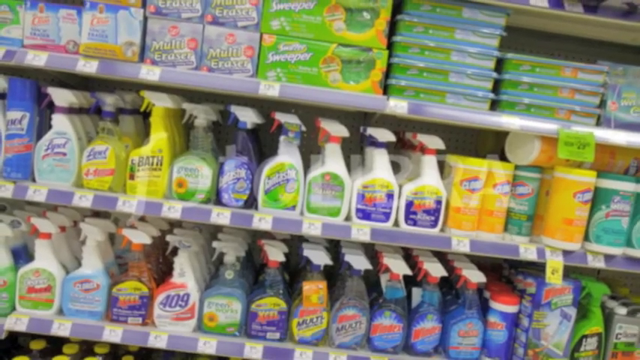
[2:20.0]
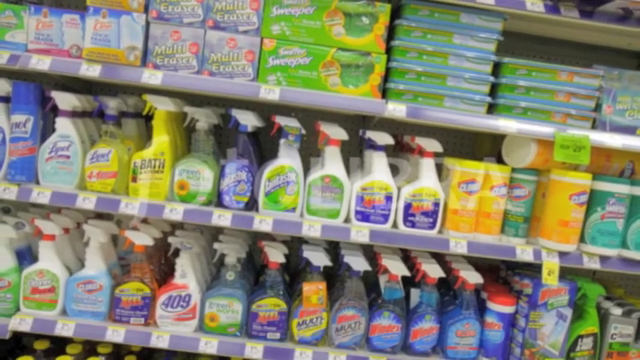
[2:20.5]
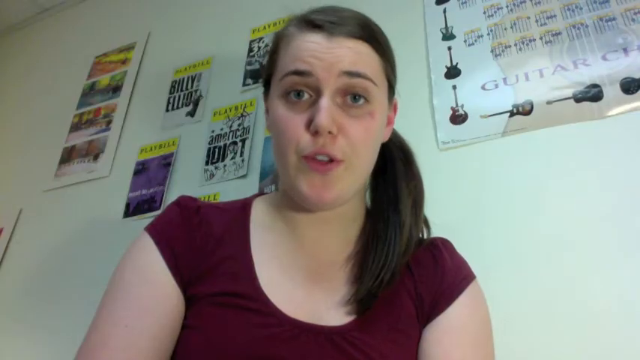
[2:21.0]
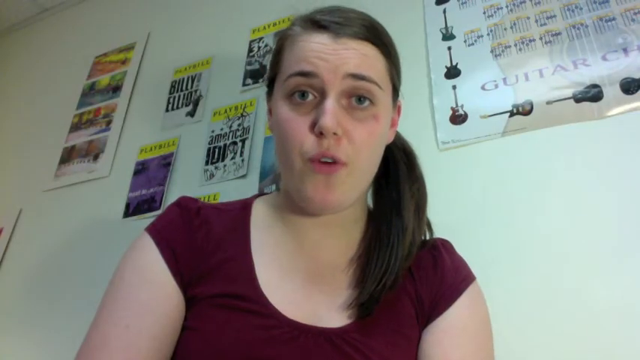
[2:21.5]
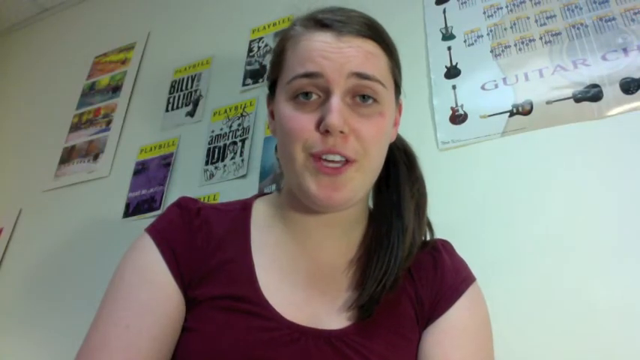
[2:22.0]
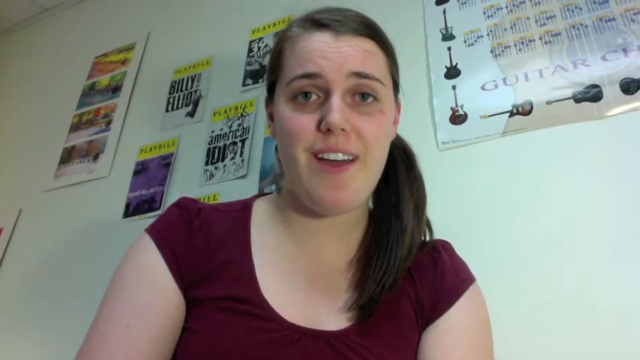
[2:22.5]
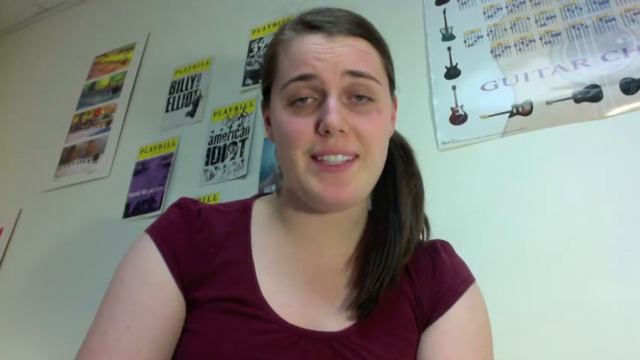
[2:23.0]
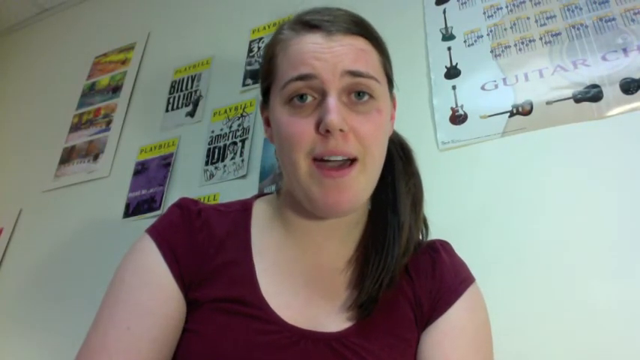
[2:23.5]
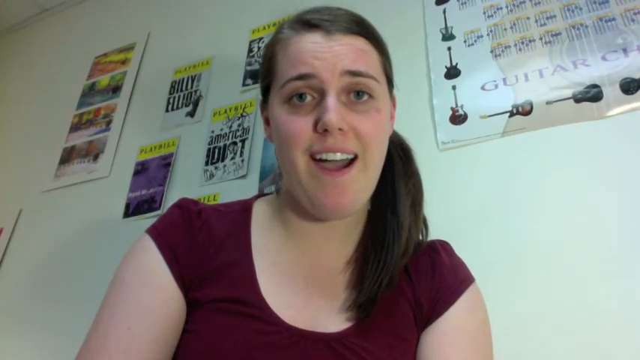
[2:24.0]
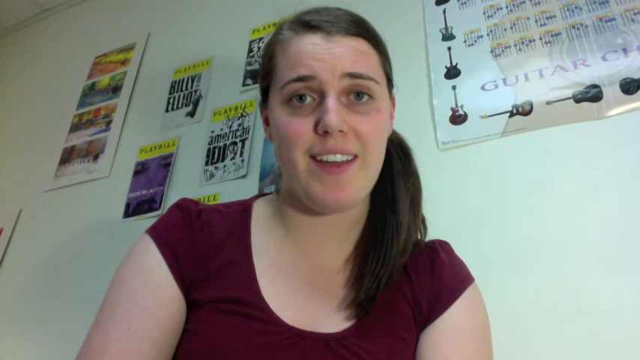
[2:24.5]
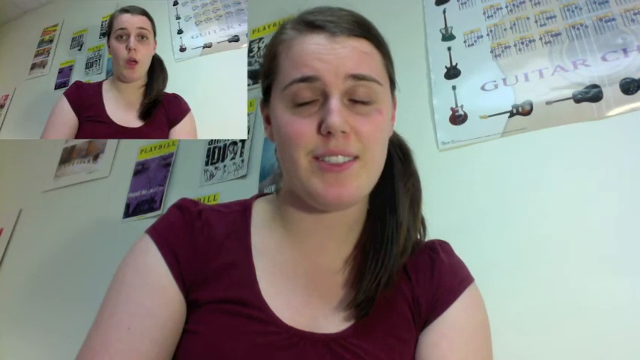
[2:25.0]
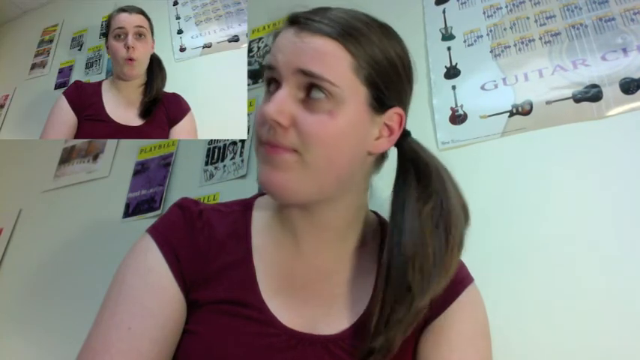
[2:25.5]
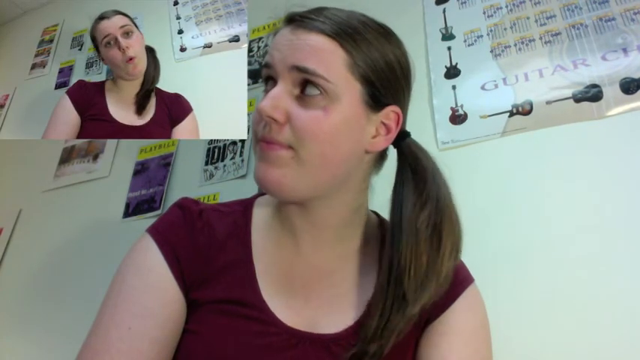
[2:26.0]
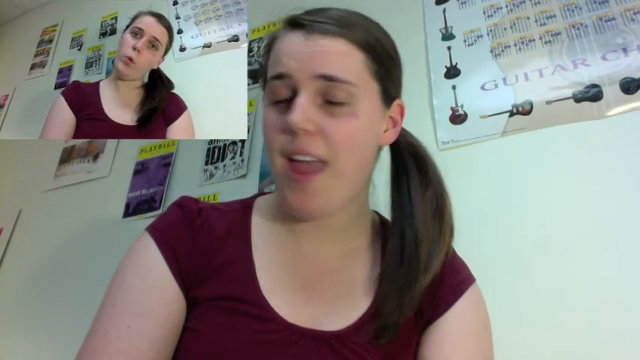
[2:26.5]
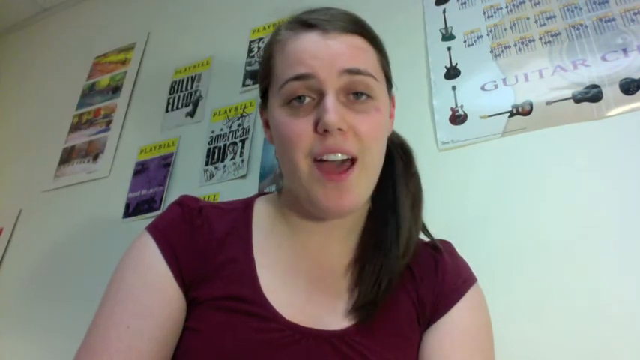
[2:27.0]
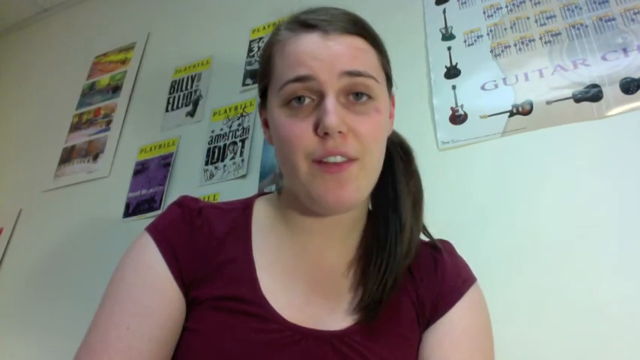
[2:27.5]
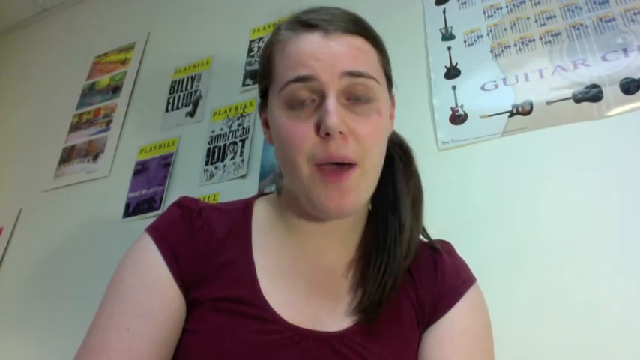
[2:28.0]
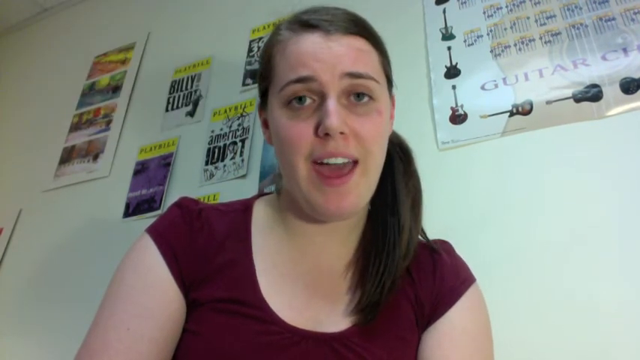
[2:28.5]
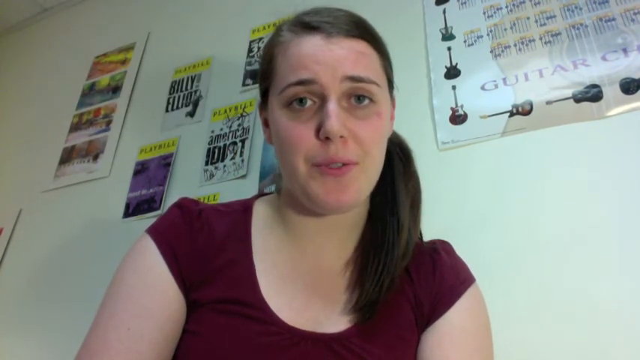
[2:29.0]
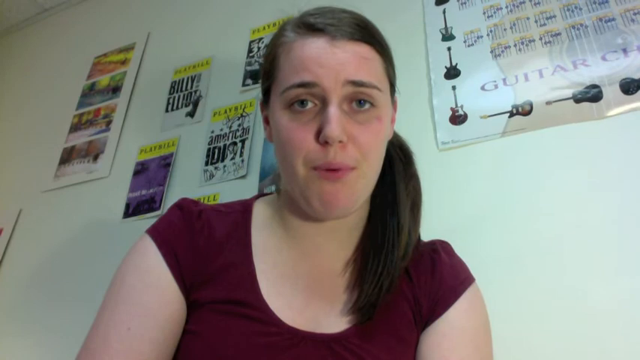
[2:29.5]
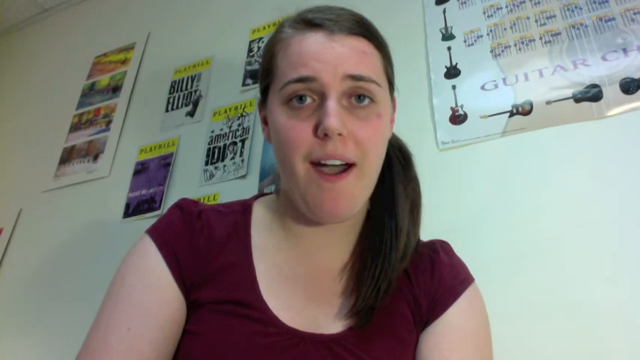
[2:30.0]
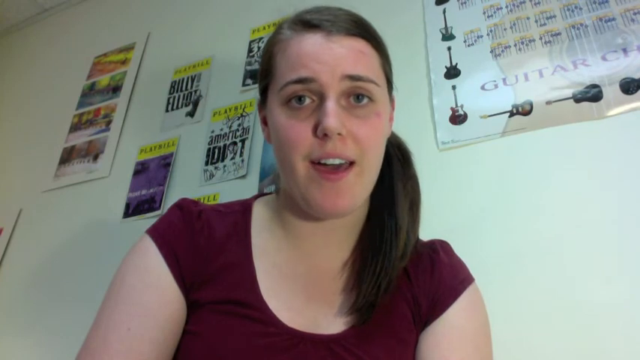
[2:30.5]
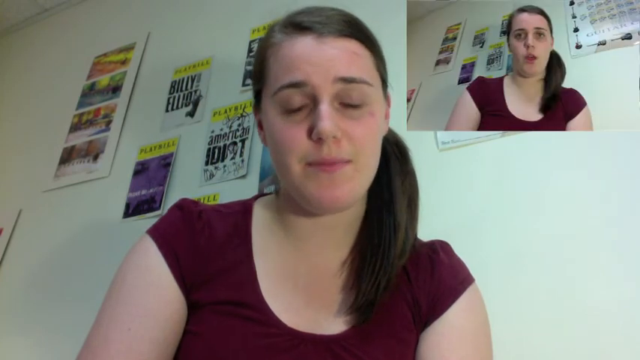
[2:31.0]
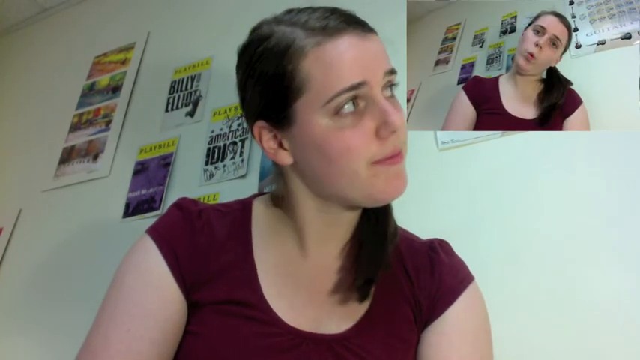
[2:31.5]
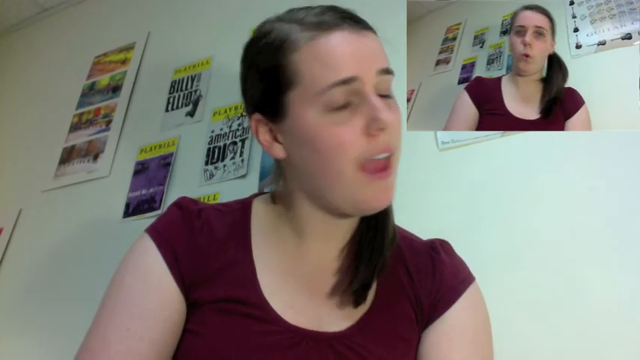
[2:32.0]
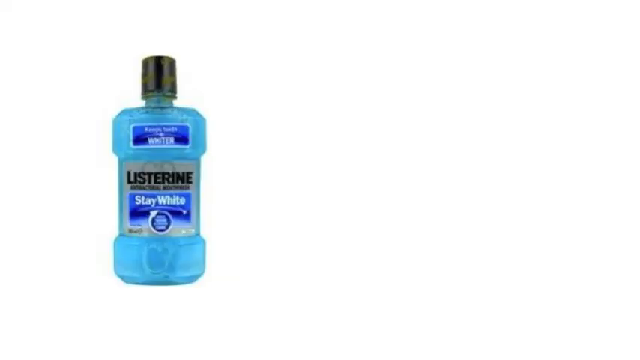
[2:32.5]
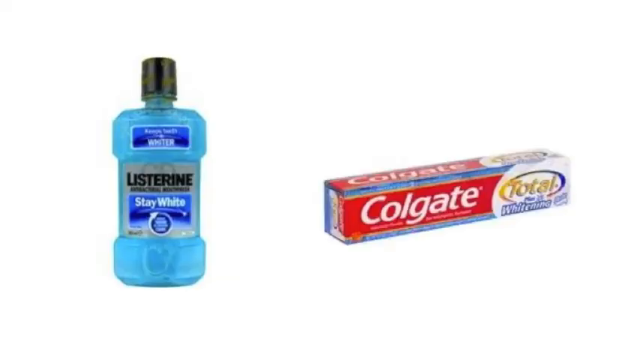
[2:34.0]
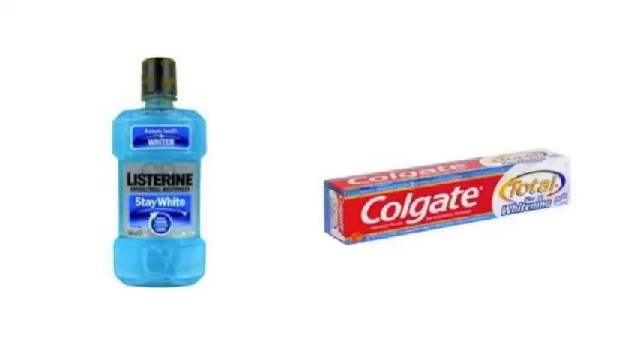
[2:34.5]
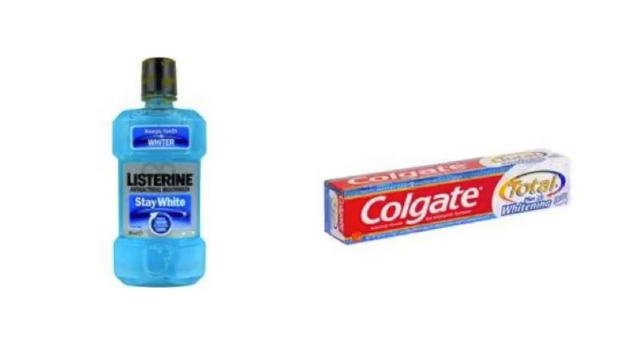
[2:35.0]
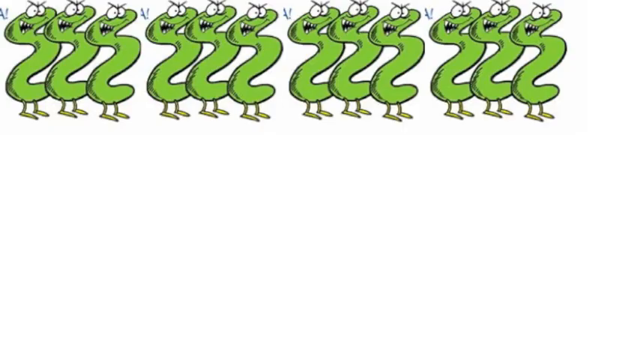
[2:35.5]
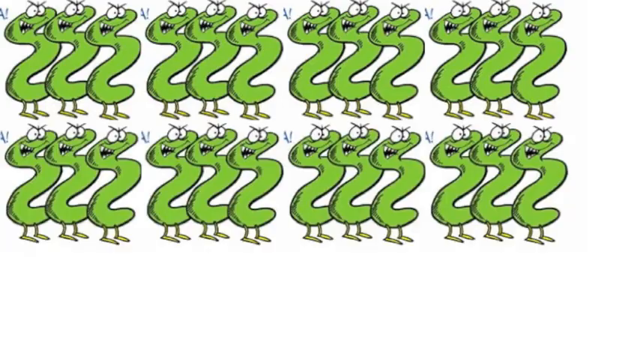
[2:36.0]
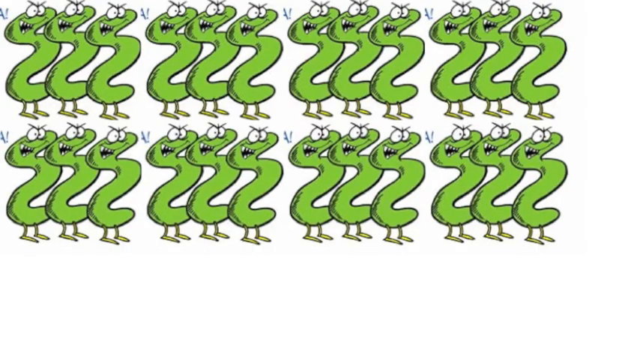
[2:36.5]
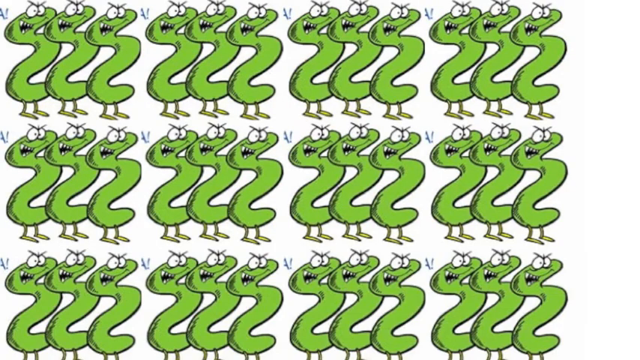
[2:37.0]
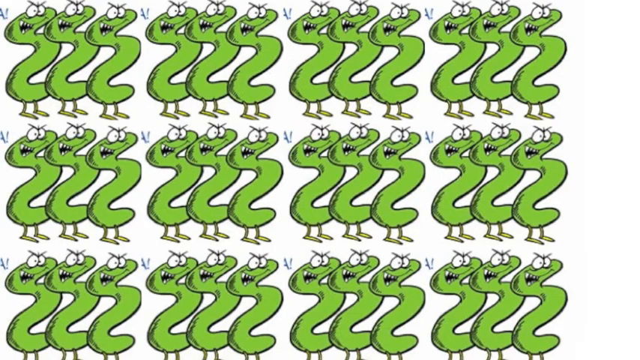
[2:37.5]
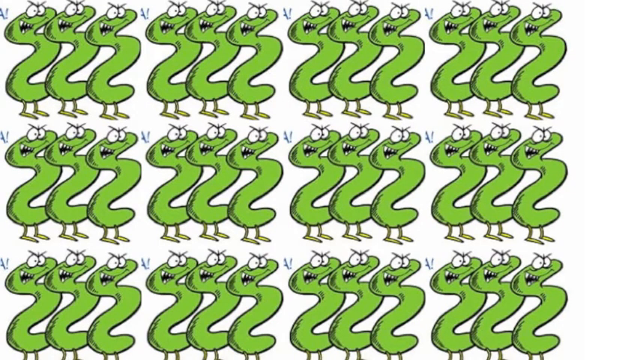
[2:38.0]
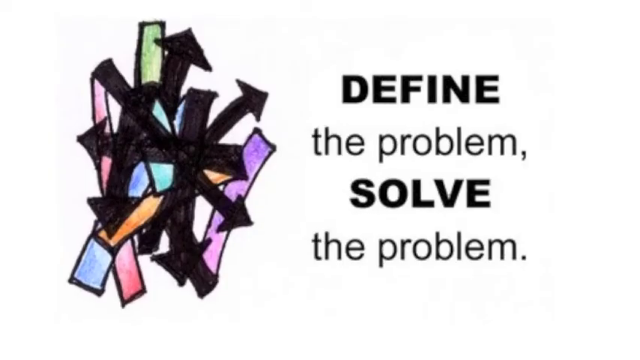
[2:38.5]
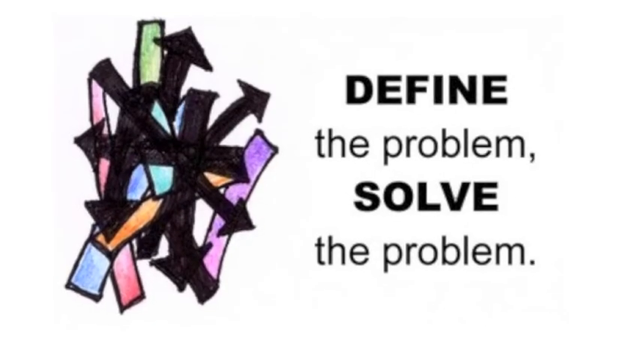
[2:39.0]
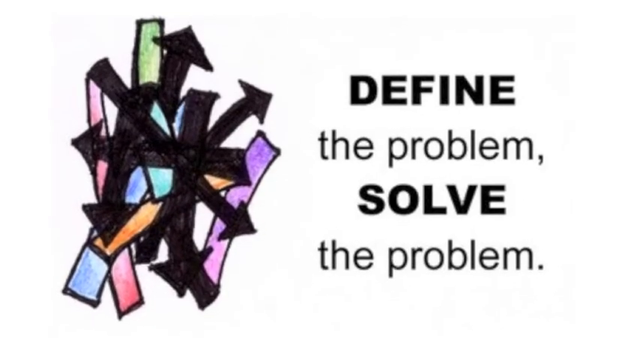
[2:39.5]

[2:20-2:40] Cleaning supplies with price tags on the bottom are lined up in a row on store shelves. The first section has what look like mopping products, Scrubbing Bubbles and mop pads; the second shelf holds Lysol and Clorox wipes; then come what looks like Windex and blue bottles with tags. The view slowly goes to the girl, who talks, looks up at her picture, moves her head side to side, then looks back at the screen and to the other side. Listerine Stay White, in a black and blue bottle, appears with a blue bottle. A bunch of viruses follows: about 12 sets of three green bacteria shaped like squiggly S's, with happy faces and really bushy black eyebrows. The text "define the problem and solve" appears, then the lined-up cleaning supplies return. The girl appears for about five to six seconds, still whistling and moving her head, and looks like she might be singing a little. Colgate Total shows up on the screen.